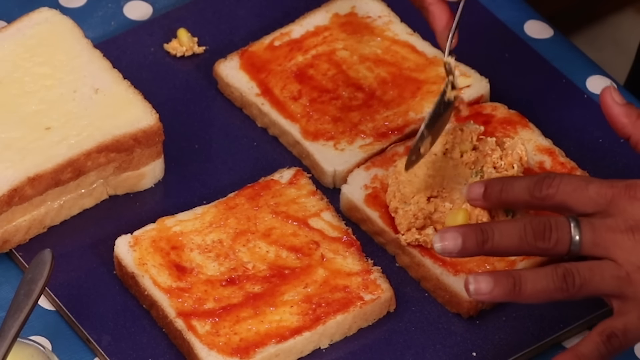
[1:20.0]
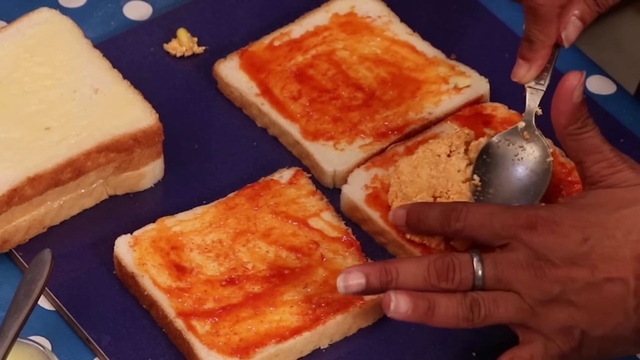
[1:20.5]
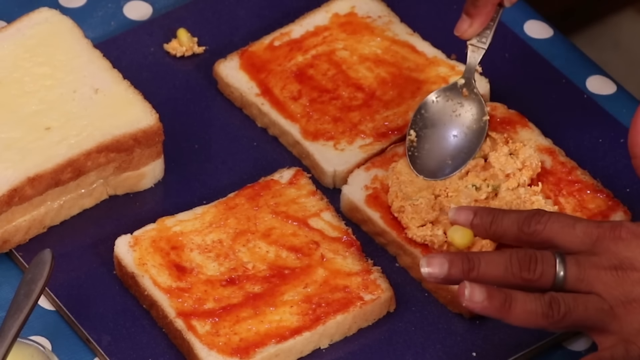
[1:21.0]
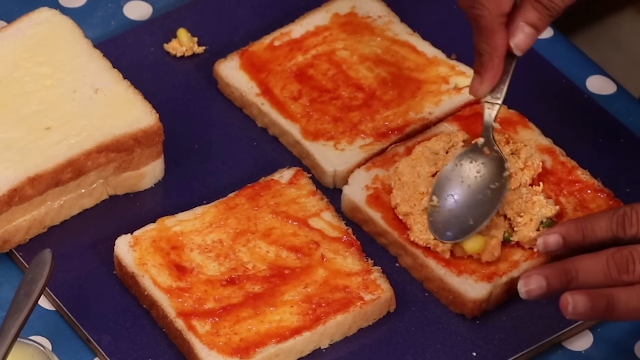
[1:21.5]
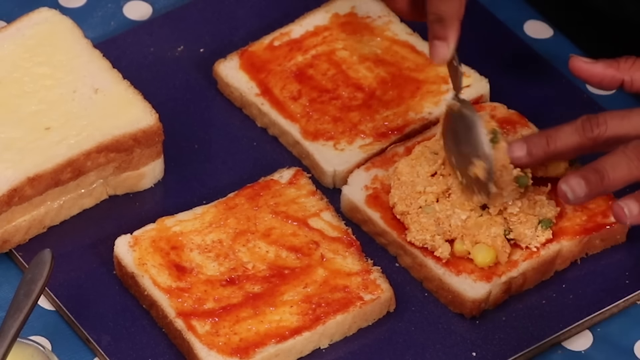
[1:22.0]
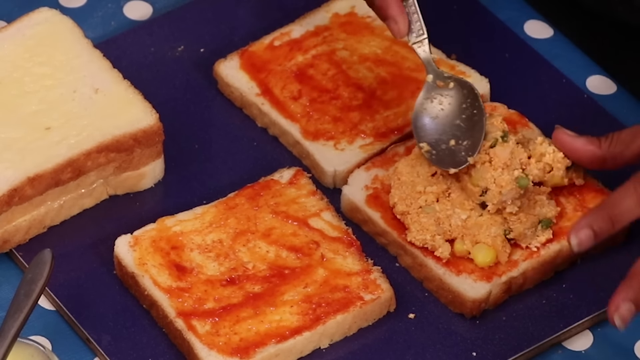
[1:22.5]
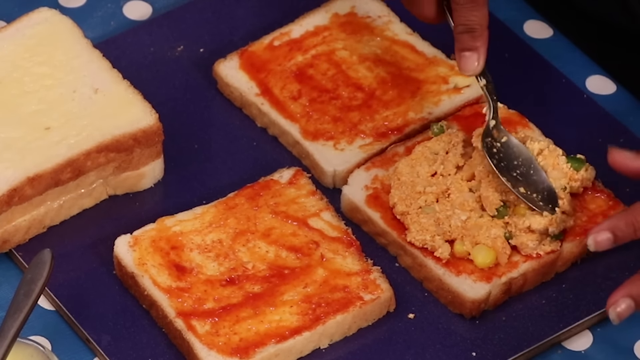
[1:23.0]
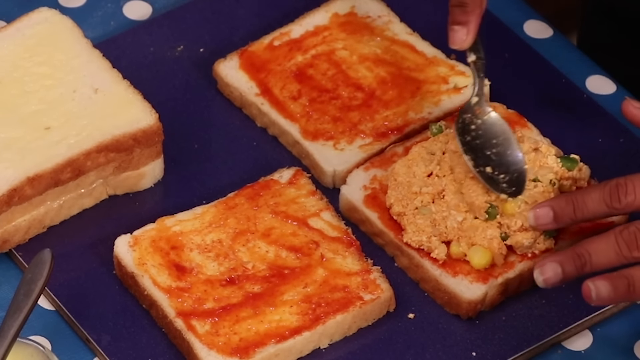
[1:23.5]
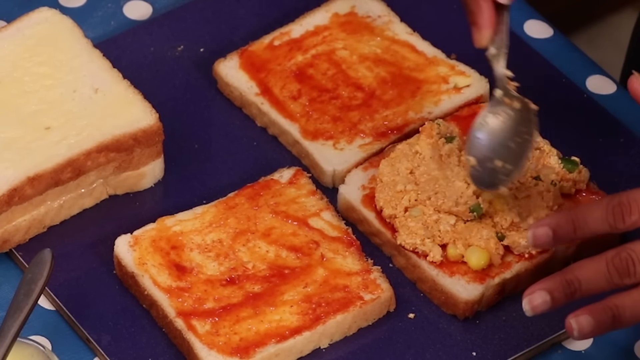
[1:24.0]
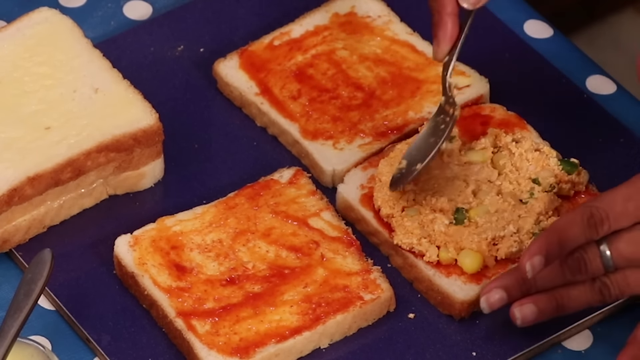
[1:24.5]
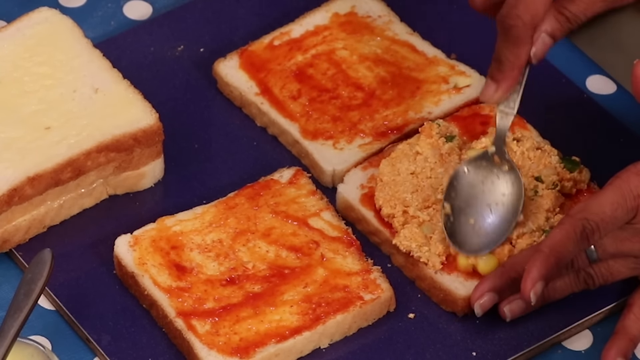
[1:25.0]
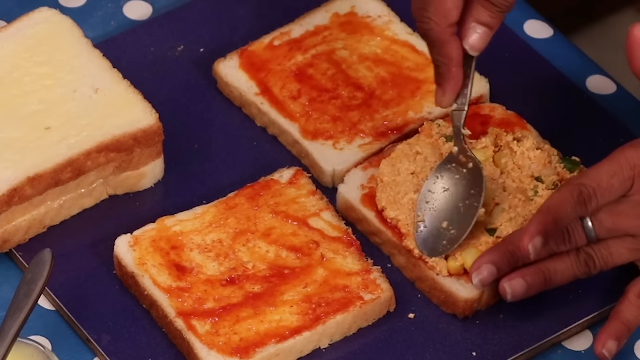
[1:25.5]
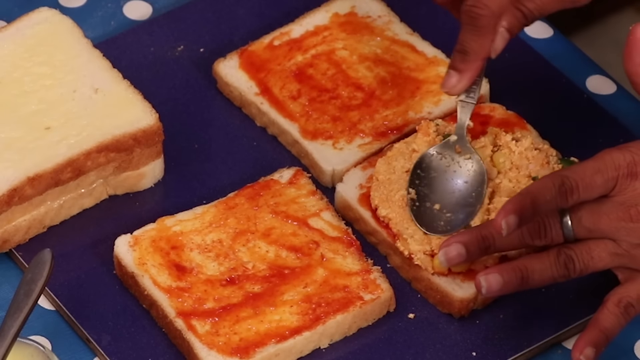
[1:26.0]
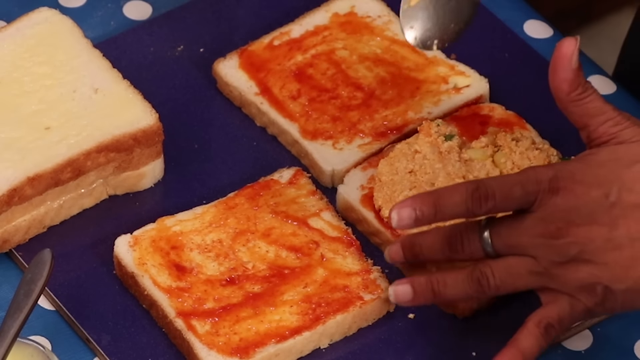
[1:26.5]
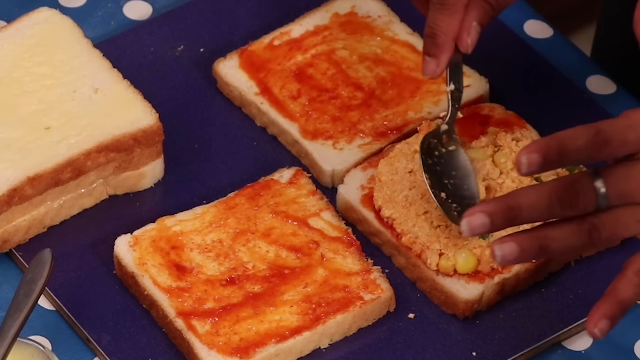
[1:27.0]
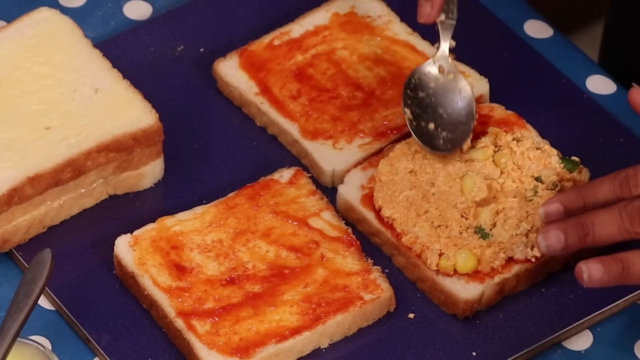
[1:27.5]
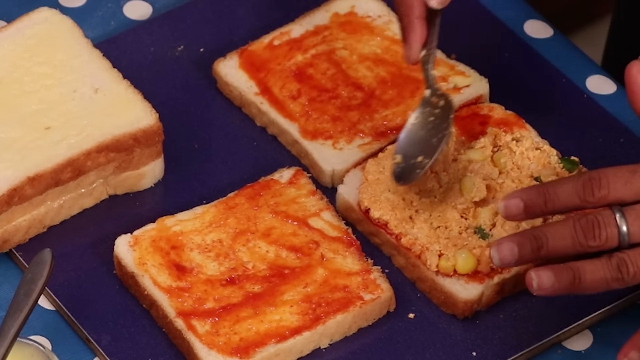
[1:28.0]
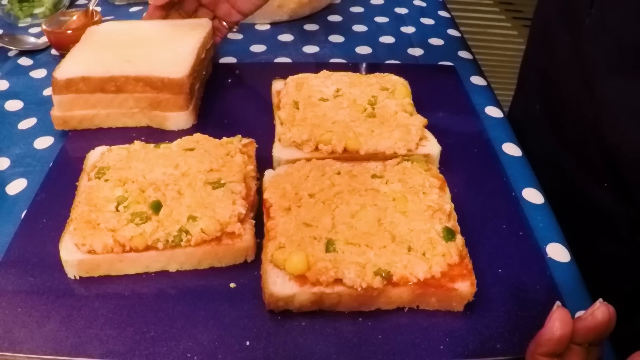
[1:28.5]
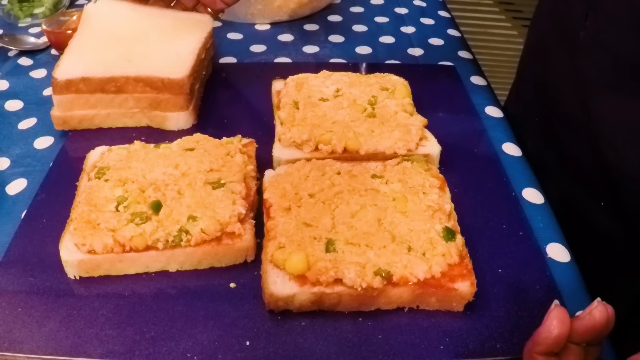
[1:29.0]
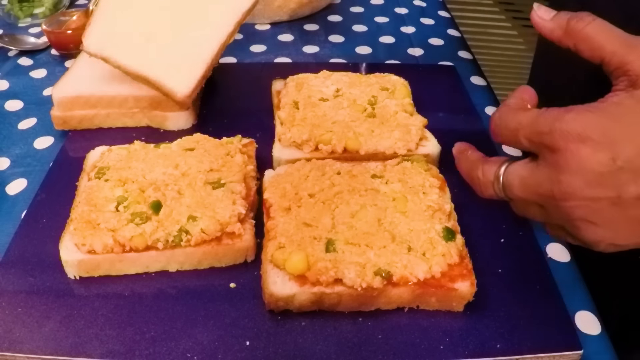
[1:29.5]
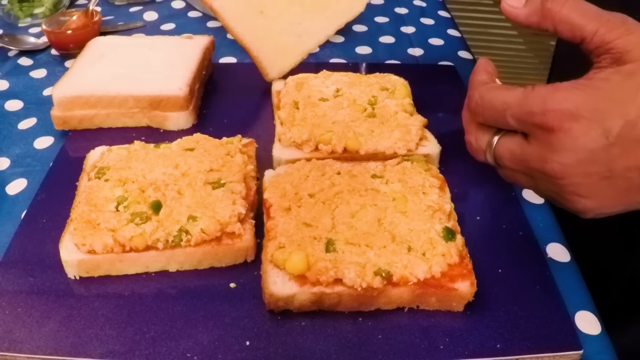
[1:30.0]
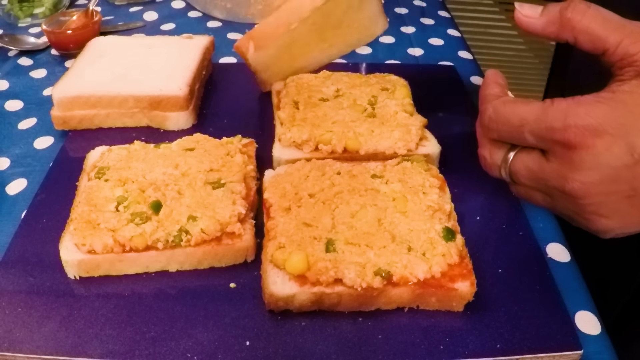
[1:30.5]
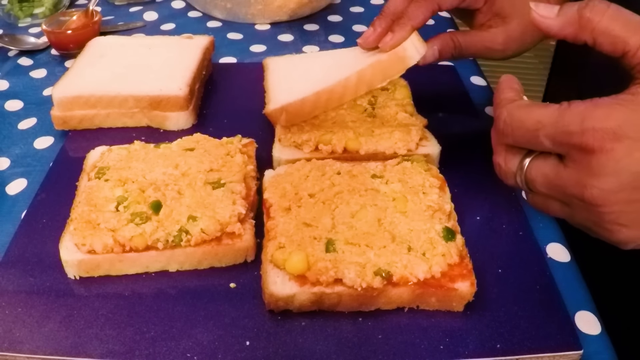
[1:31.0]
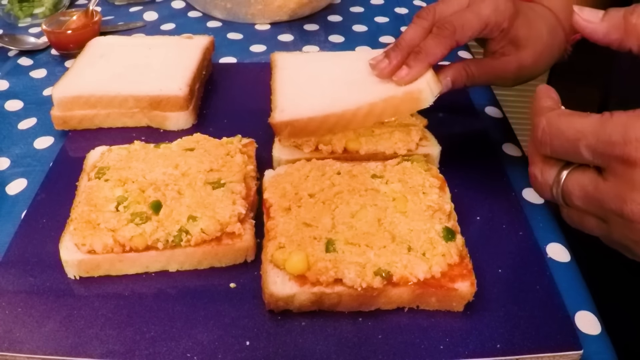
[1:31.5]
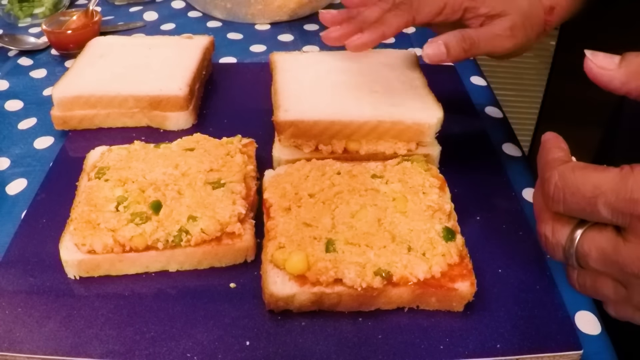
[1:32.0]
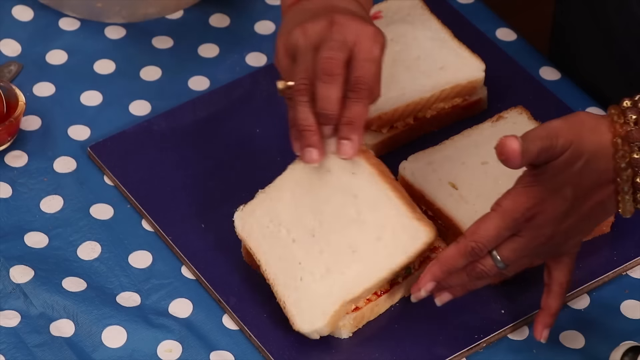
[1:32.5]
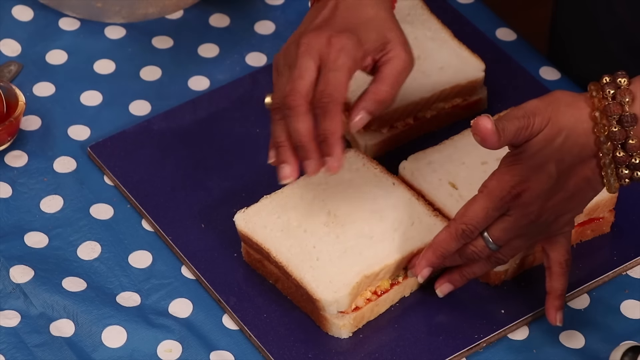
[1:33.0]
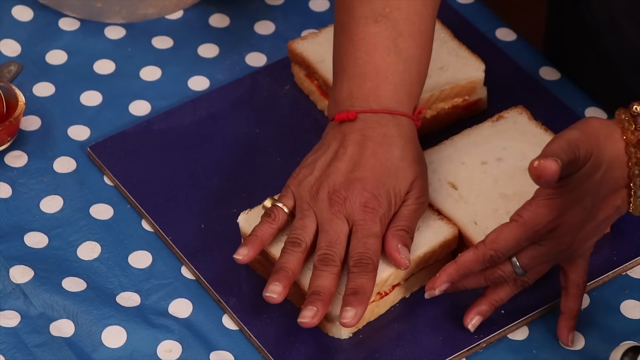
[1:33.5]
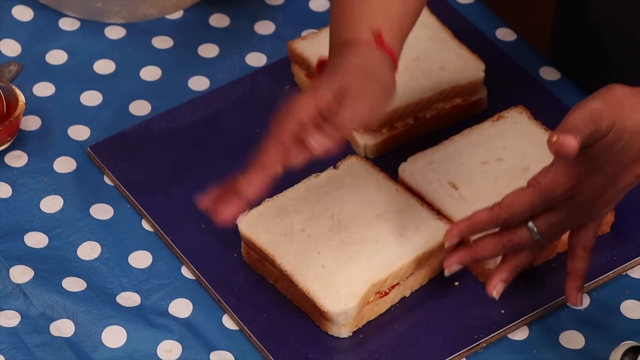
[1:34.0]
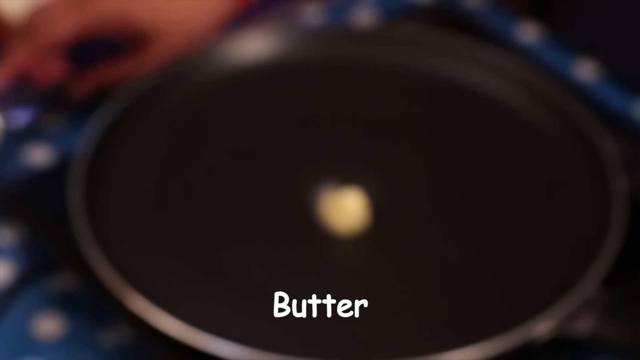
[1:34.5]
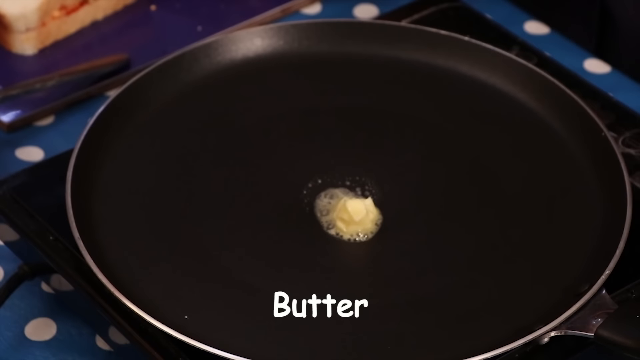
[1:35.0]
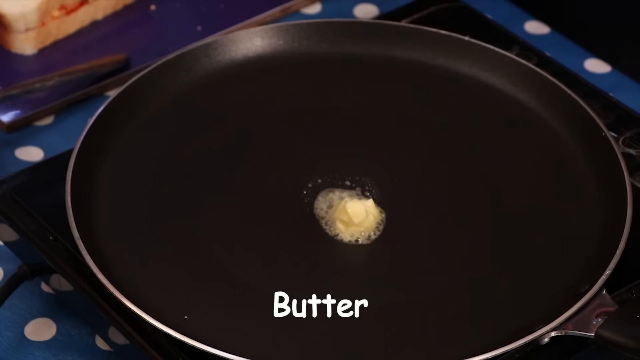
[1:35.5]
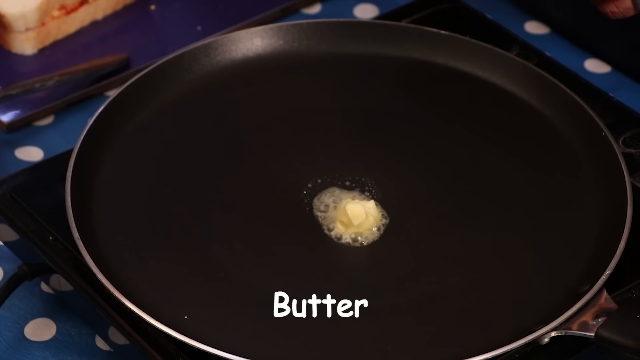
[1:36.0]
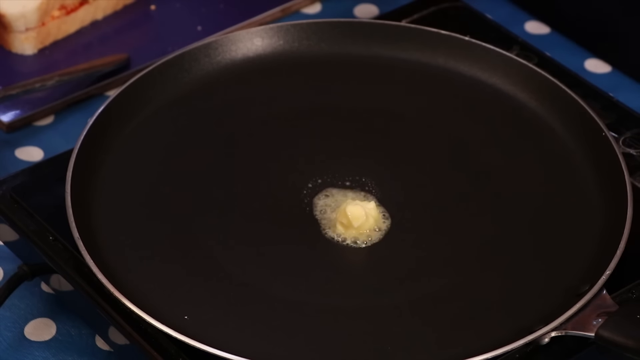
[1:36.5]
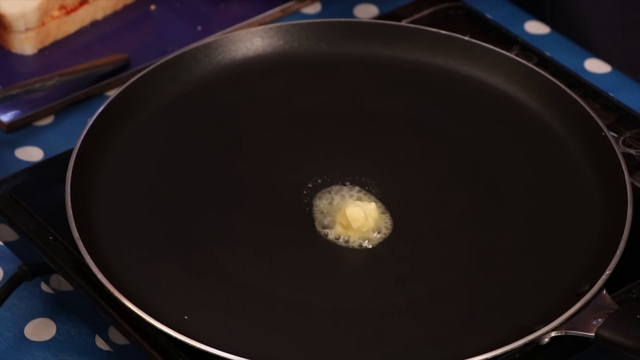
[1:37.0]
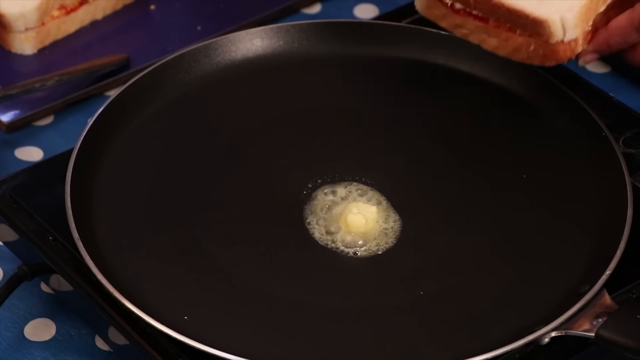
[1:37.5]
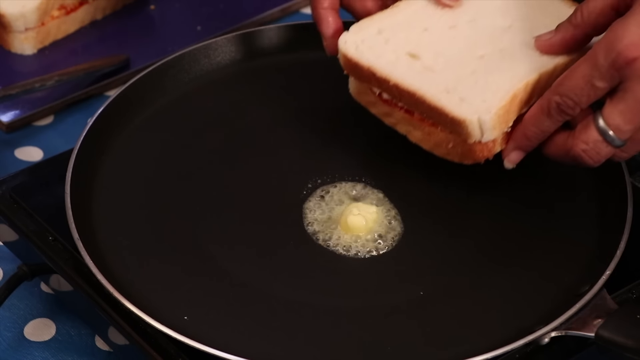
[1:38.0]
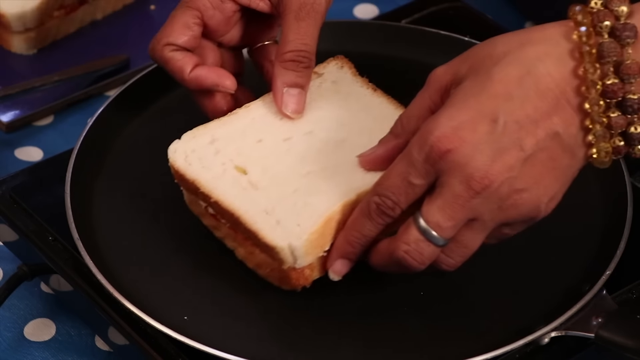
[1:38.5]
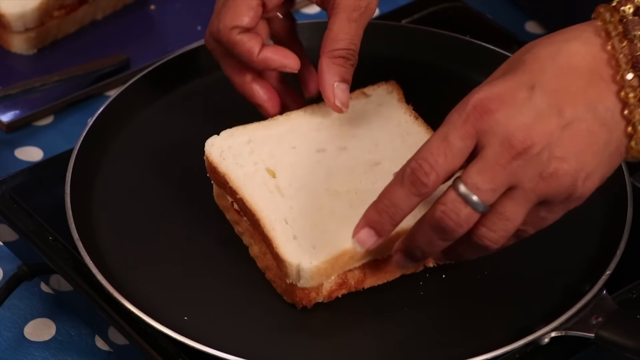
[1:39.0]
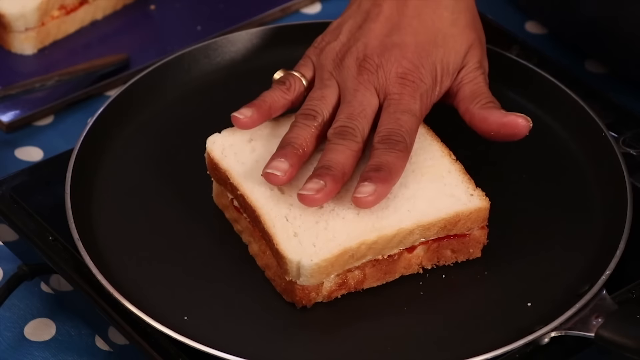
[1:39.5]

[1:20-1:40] She puts down one big dollop of the mixture and spreads it out, then adds another, for two dollops in total. She uses a couple of fingers on her left hand to push it down where it reaches the edge of the crust, and flattens it with the back of the spoon from edge to edge, left to right, using the edge of the spoon to shape it into a round formation like a patty. She puts on the other piece of bread, which has butter, and does three sets. She warms some butter in a skillet, where it can be seen sizzling, and places the sandwich she just assembled right on top. It is not a lot of butter; it is whipped and probably covers only about 20% of the bread's surface. The sandwich sits on the butter for a moment. Her bracelets are visible more closely: there are three, two of which have wood-looking beads connected by a little gold chain. The one closest to her palm looks different, with a gold band running around it and gold rings of the same size within it, almost like links.